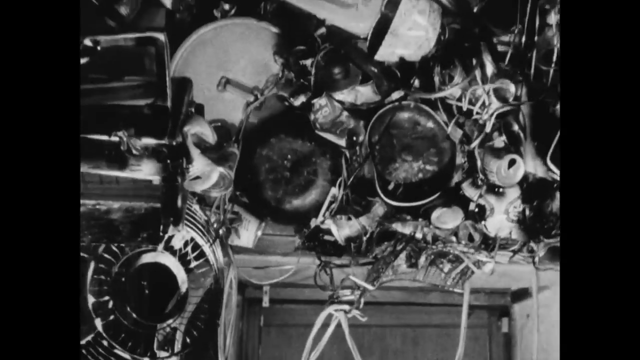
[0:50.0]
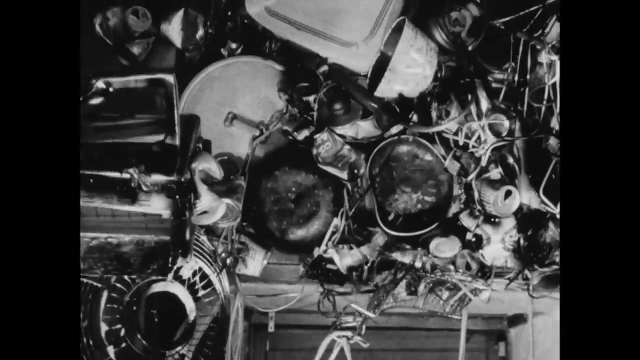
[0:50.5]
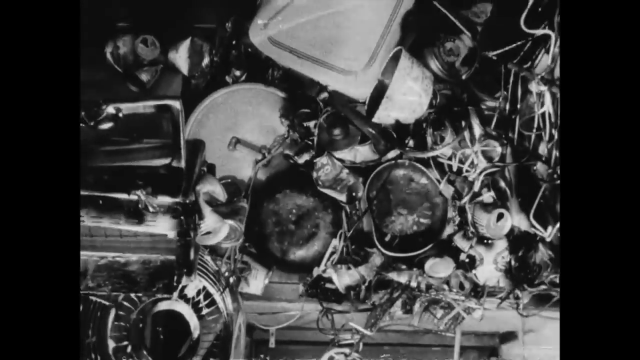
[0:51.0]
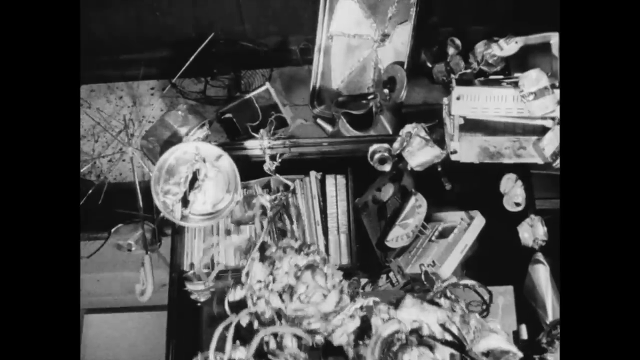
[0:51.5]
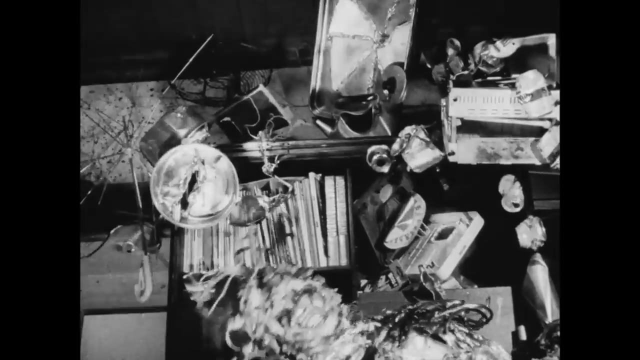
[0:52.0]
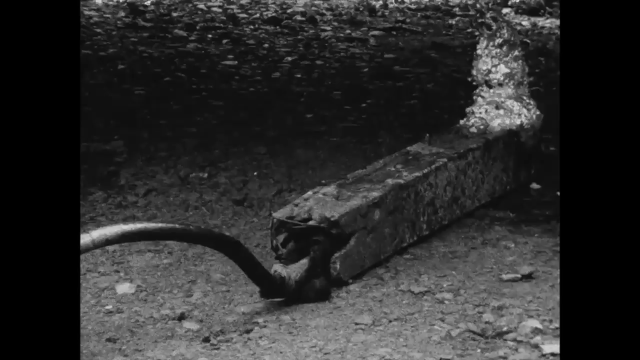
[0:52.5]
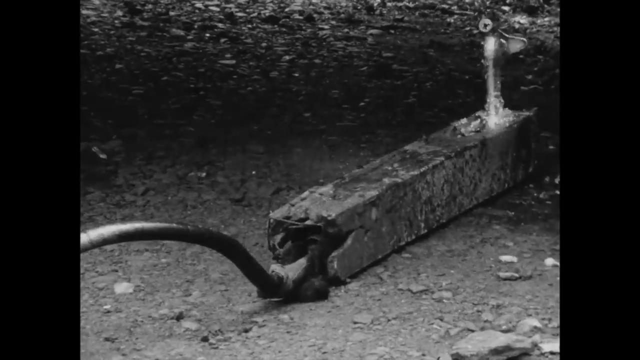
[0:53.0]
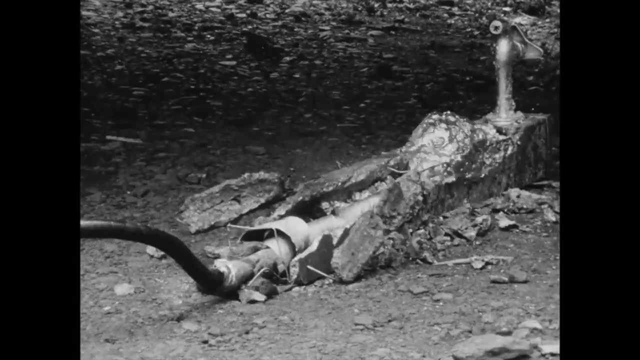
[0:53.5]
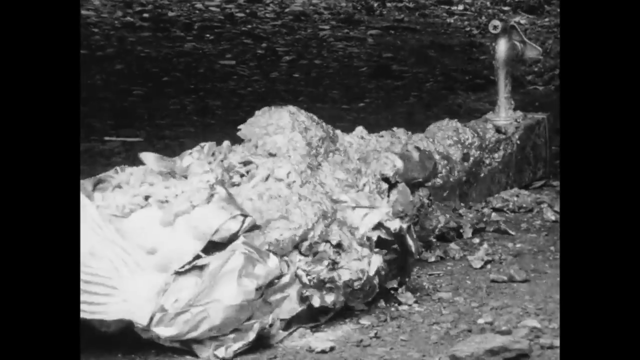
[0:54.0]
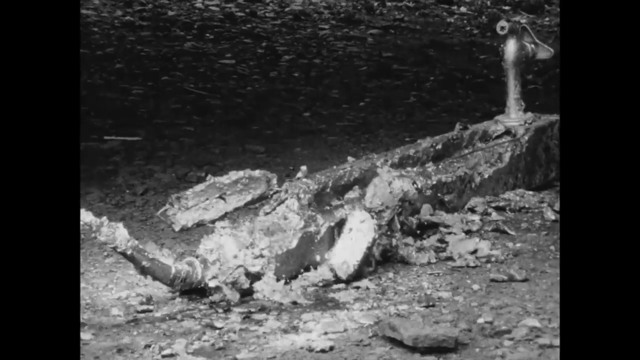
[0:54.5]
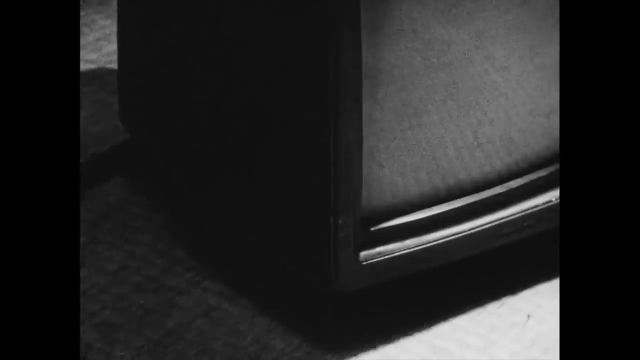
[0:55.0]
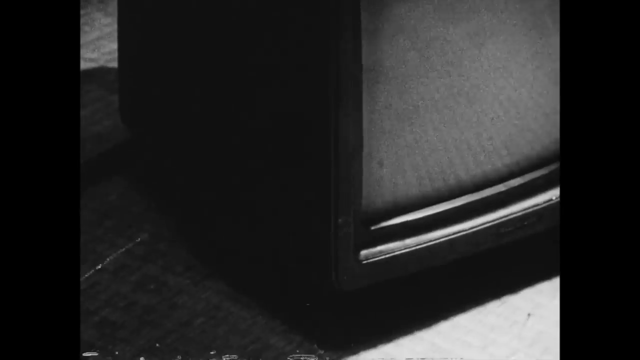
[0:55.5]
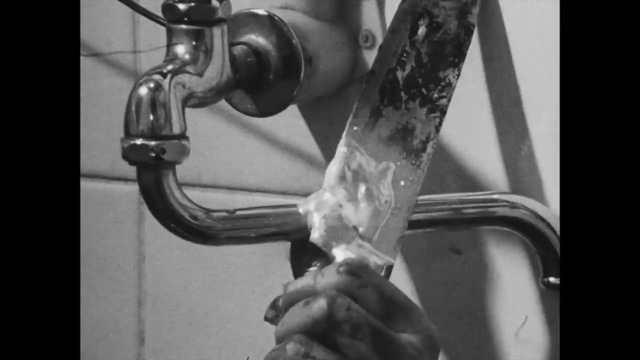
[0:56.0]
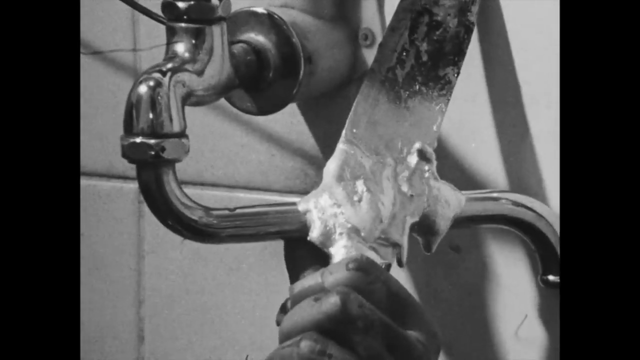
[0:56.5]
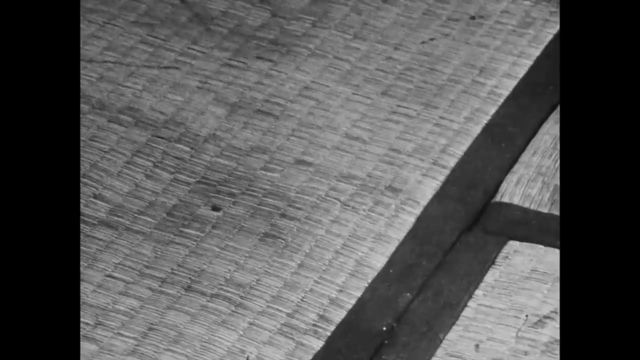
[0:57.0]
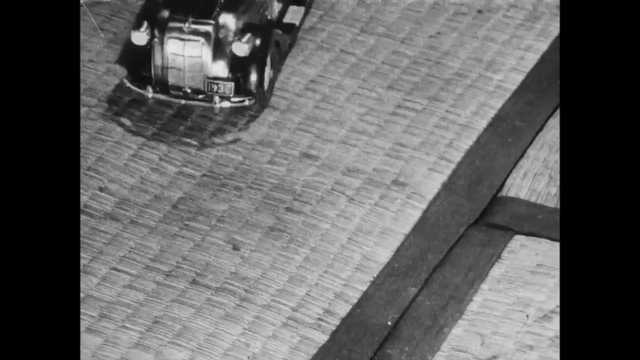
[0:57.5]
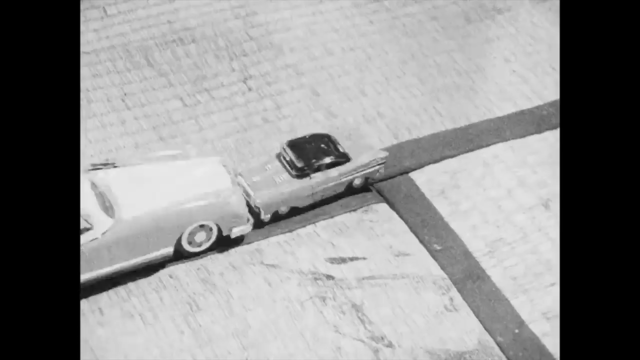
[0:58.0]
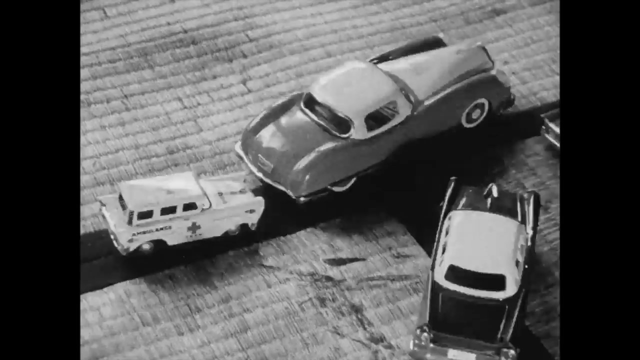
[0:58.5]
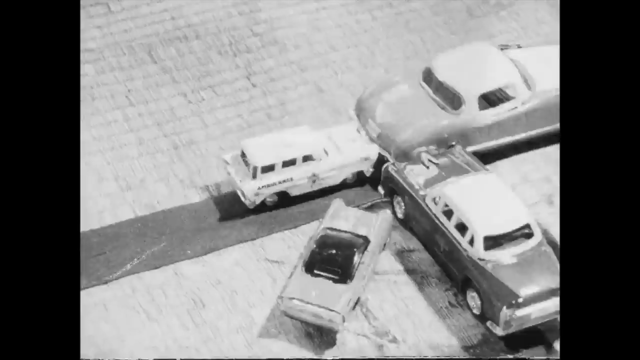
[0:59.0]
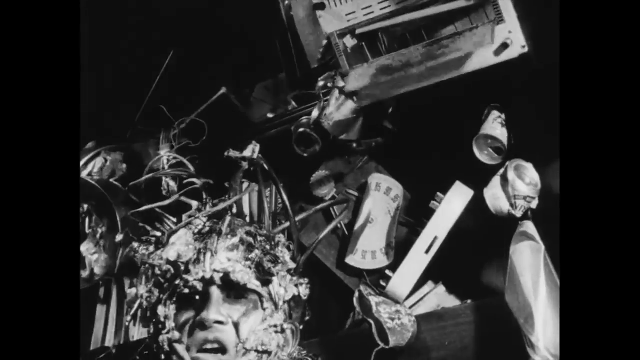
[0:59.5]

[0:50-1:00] The ceiling of his room is covered with a bunch of metal: pots, pans, soda cans and aluminum cans, almost as if everything has been magnetized. It appears the man may not be wearing a robot suit but is magnetic, so his suit is made of the different bits of metal that have stuck to him. He holds a knife, trying to cut through a metal pipe. Several toy cars drive across a rug on the floor. The man then appears wearing some kind of helmet made of flotsam and jetsam of metal parts.